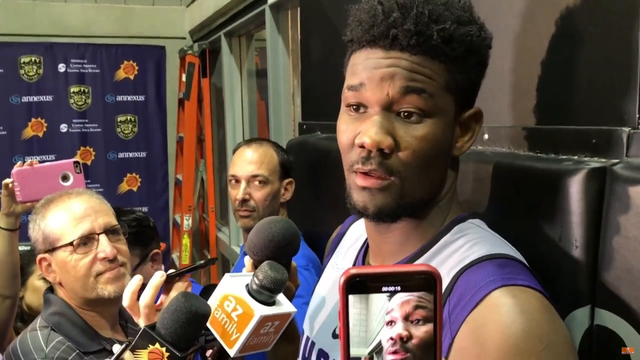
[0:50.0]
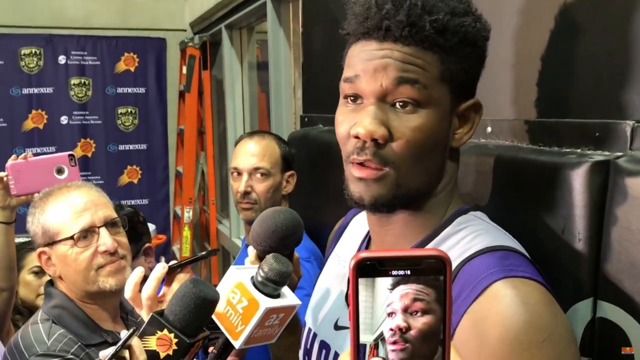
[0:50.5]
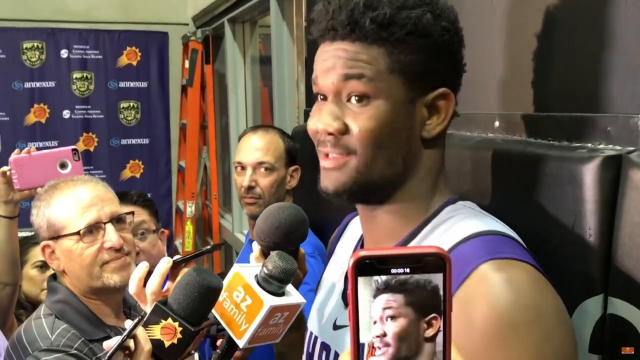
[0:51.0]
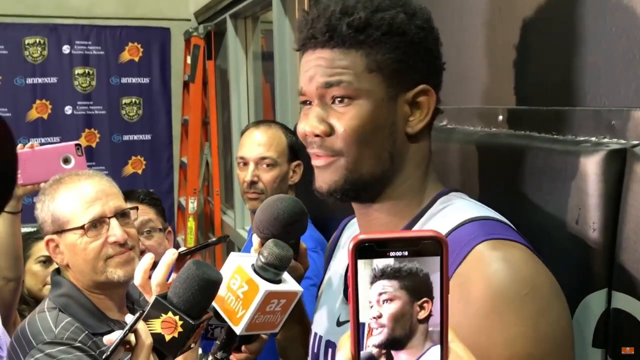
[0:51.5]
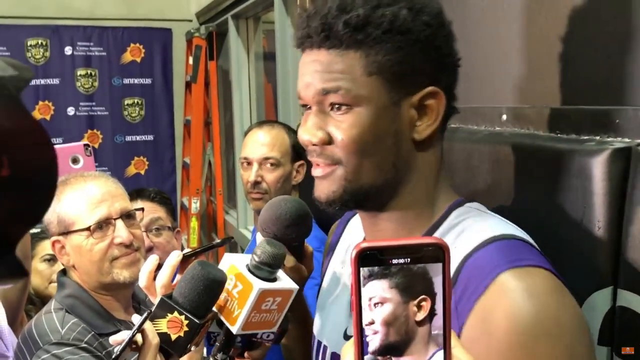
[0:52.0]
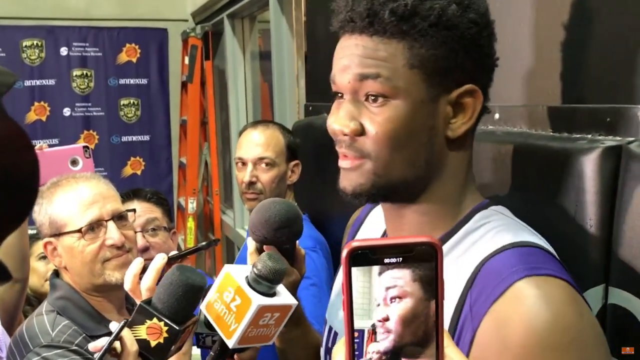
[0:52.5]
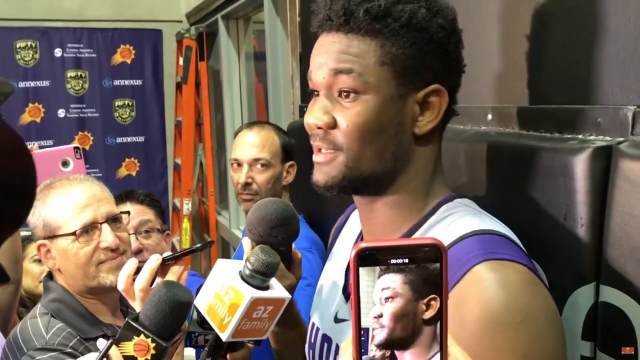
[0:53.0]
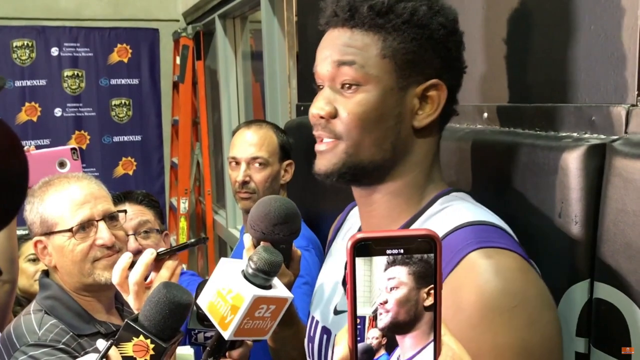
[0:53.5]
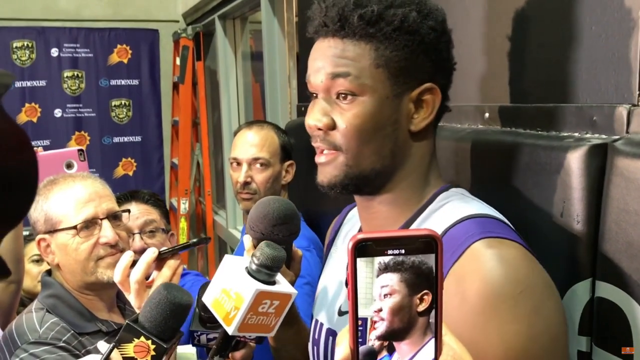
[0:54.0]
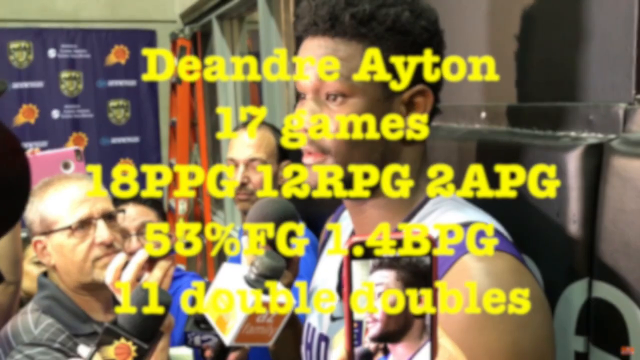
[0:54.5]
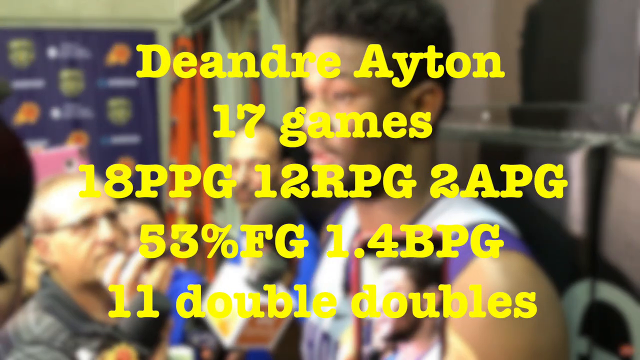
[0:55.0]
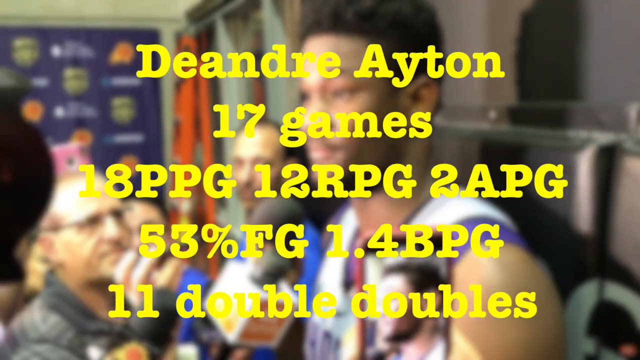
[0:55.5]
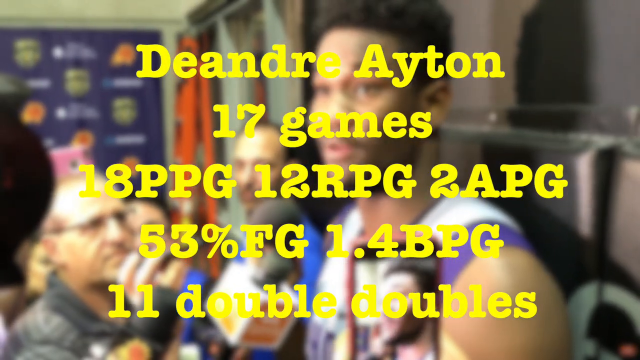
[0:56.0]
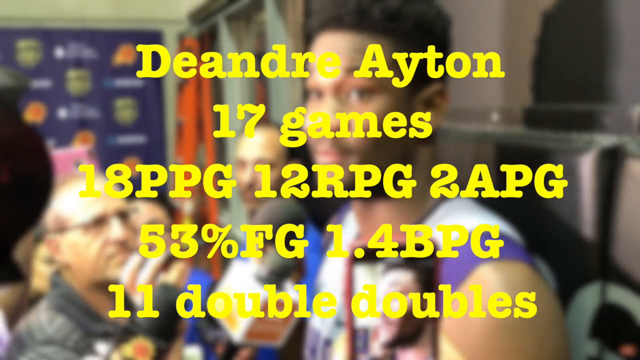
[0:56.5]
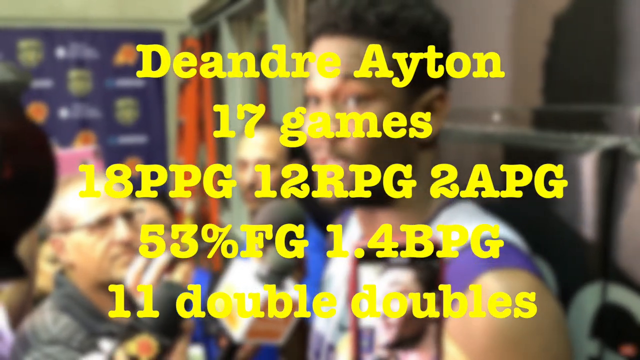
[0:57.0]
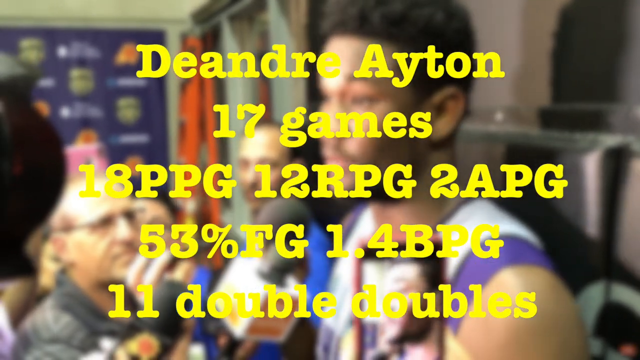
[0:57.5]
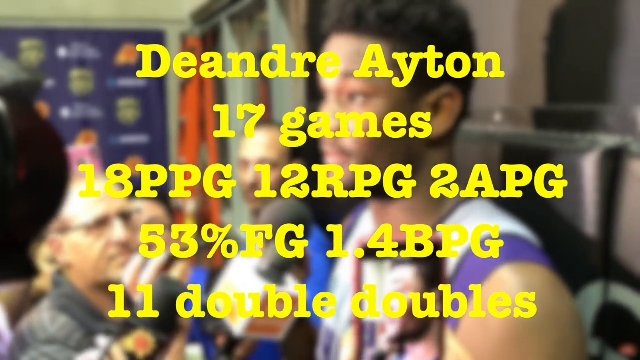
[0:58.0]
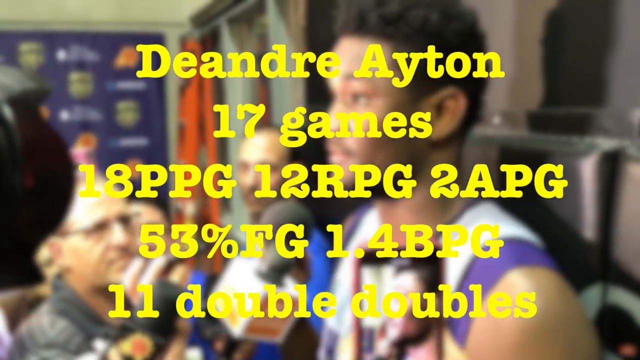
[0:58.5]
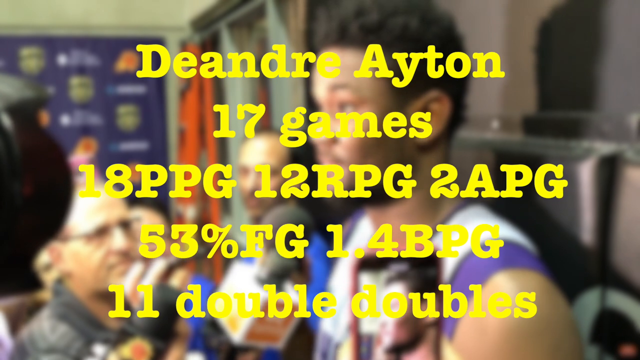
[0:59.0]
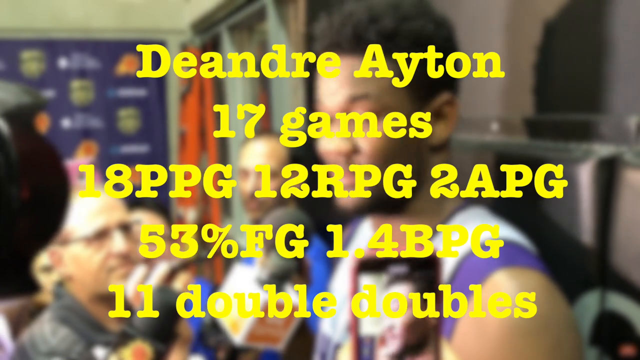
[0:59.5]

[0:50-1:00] The NBA player on the right side is answering questions, his mouth moving as he talks. On the bottom right, a cell phone is recording him, and to the left, reporters hold microphones in front of his face. In the background on the left side is a backdrop with the Phoenix Suns logo and a couple of other logos. Large yellow captions then appear in the middle, reading "DeAndre Ayton 17 games 18 points per game 12 rebounds per game 2 APG 53% FG 1.4 BPG 11 double-doubles", the player's stats over 17 games. The player keeps talking but is very blurry in the background, while the yellow captions take up most of the screen in the center.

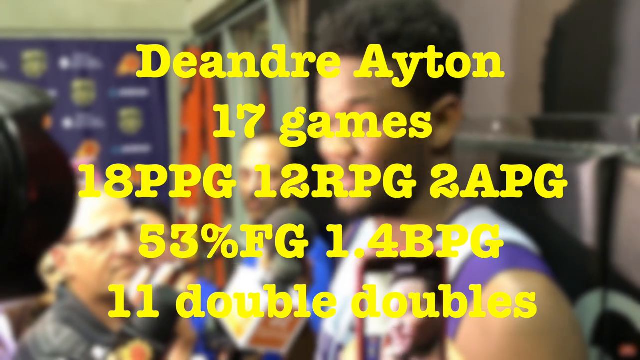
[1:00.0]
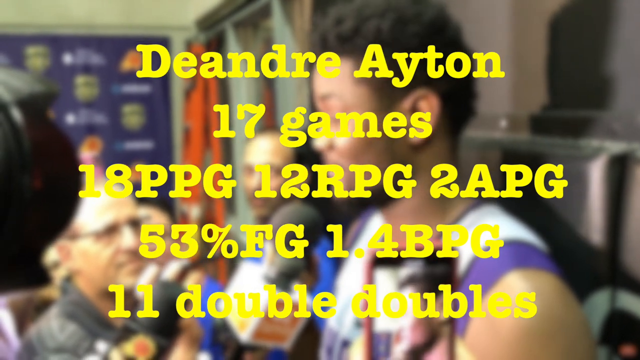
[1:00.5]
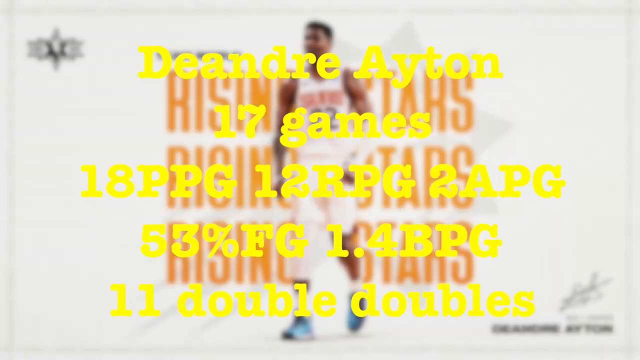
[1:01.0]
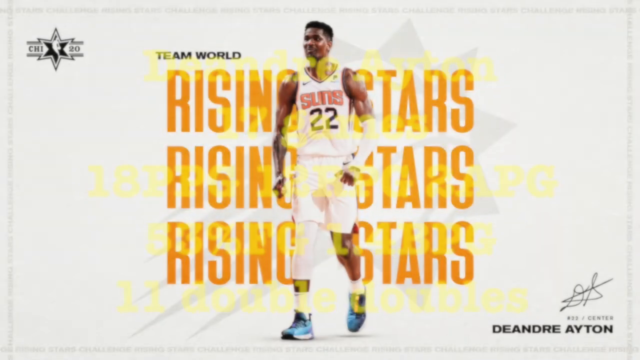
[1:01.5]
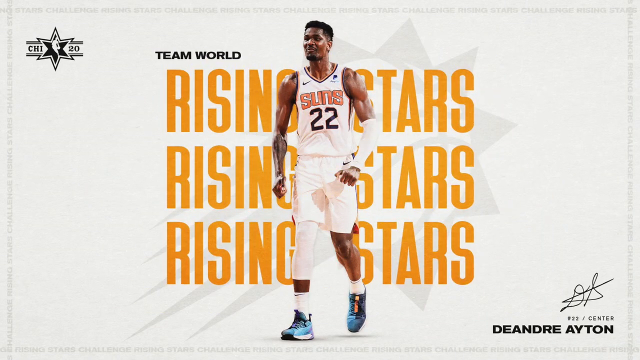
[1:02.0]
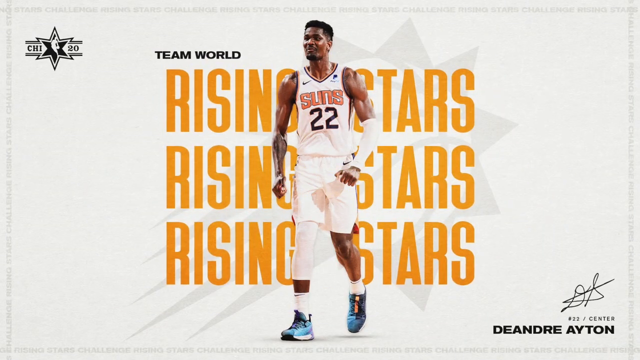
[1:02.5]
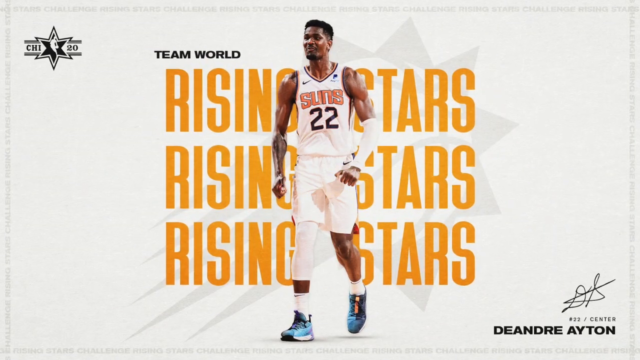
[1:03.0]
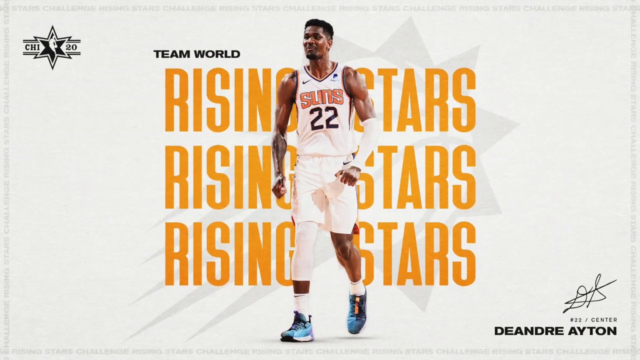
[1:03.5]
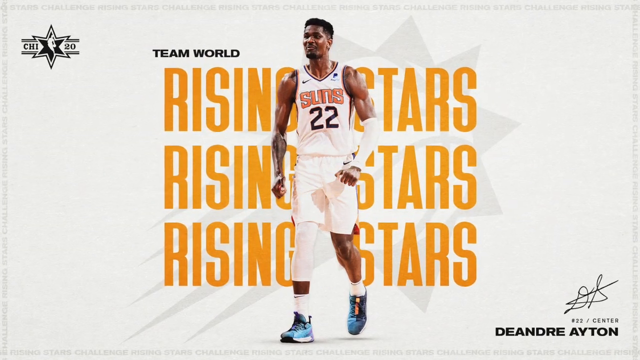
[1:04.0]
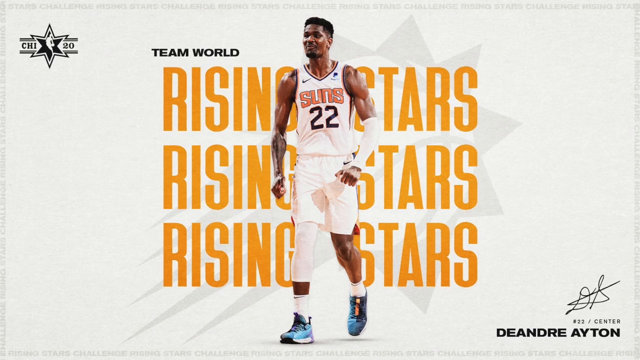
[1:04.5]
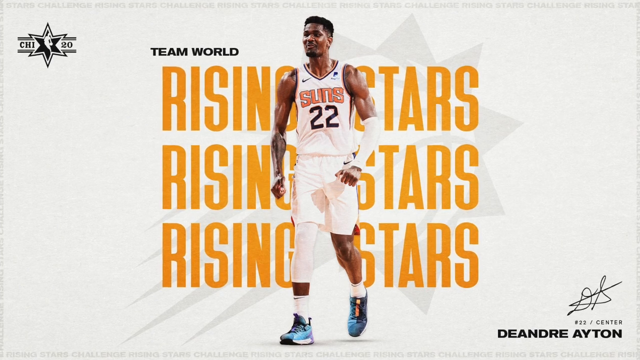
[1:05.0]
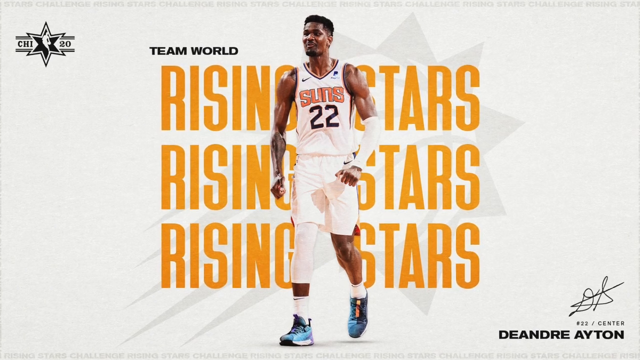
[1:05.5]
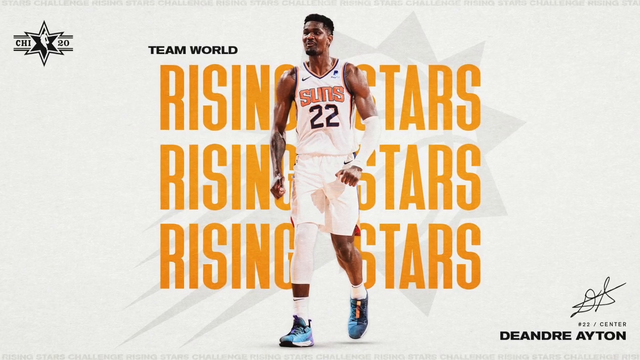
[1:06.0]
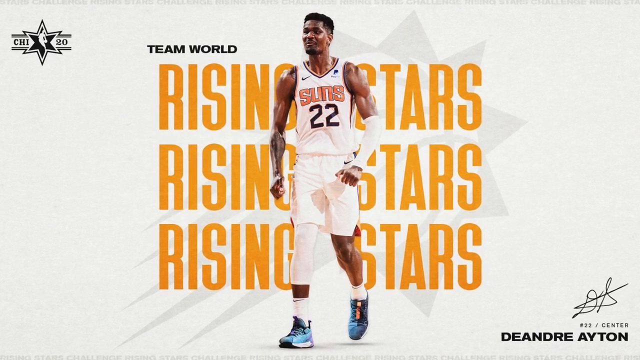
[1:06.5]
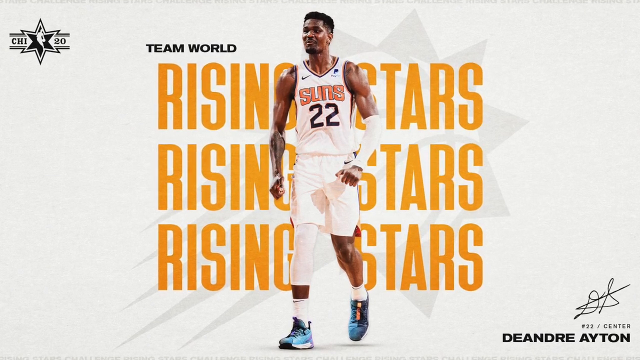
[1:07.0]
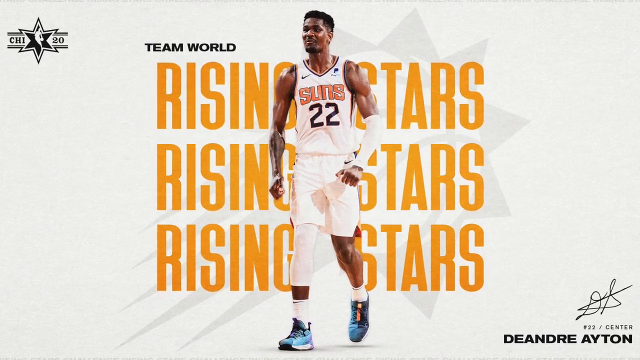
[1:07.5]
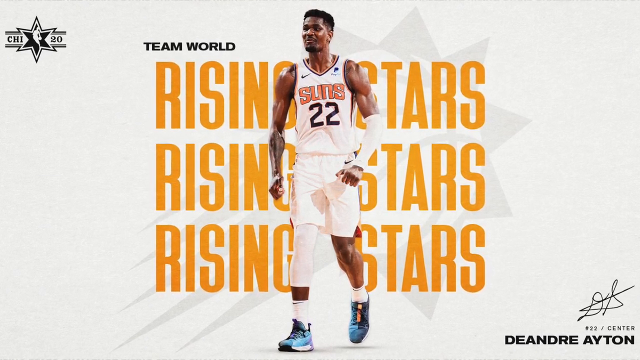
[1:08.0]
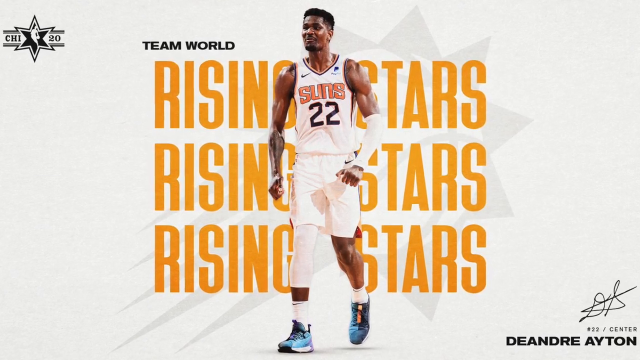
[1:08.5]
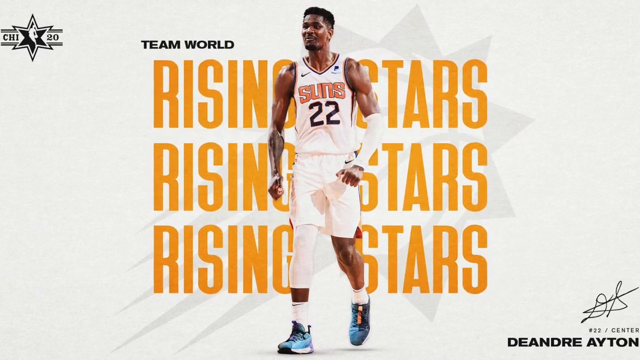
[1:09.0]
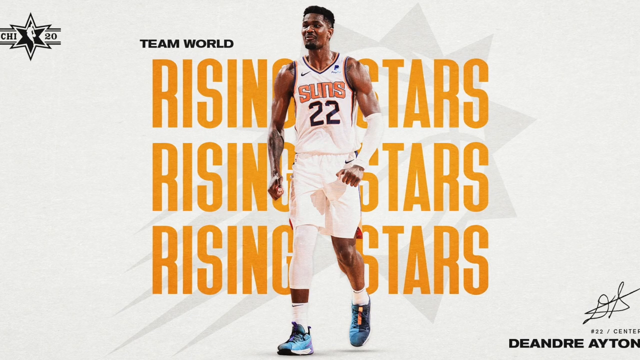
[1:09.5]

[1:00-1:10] The NBA player continues to talk, and then the screen changes to the same image of De'Andre Ayton seen before, in the middle and looking to the left again. Behind him, the words "Rising Stars" appear three times in orange on a white background. The player's name and his autographed initials are in the bottom right corner. He wears an all-white jersey uniform with the number 22 and plays for the Phoenix Suns. His arms are at his sides, and he is walking with his left knee bent and his right leg straight.